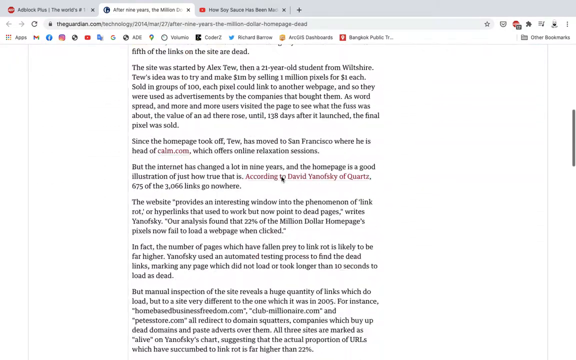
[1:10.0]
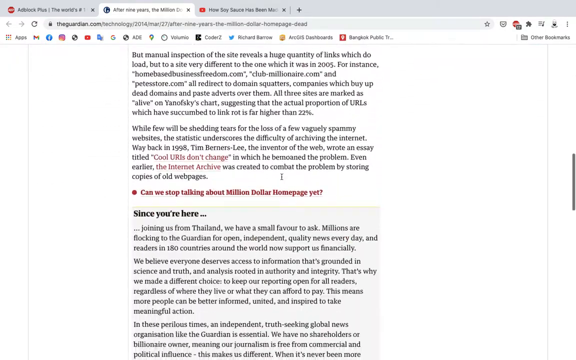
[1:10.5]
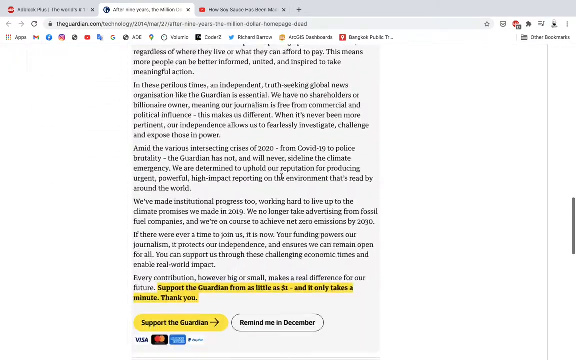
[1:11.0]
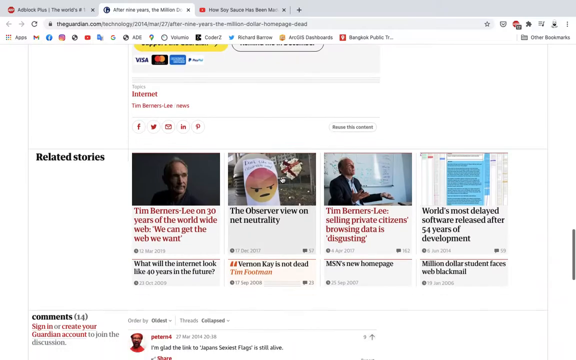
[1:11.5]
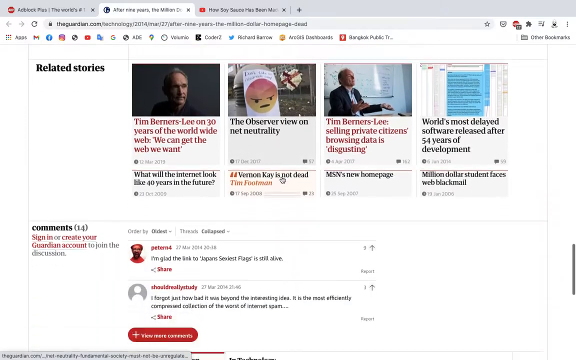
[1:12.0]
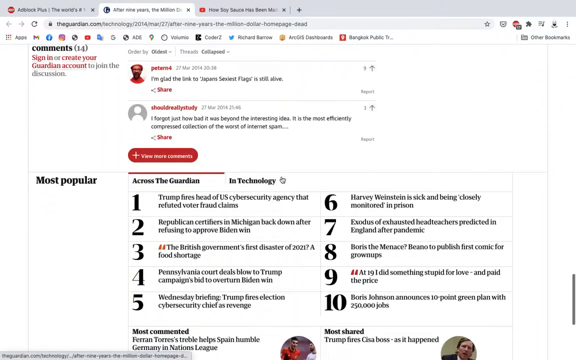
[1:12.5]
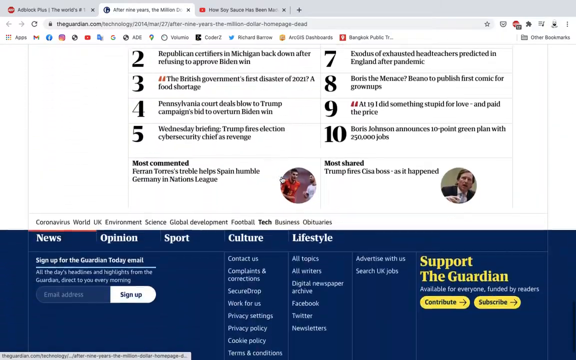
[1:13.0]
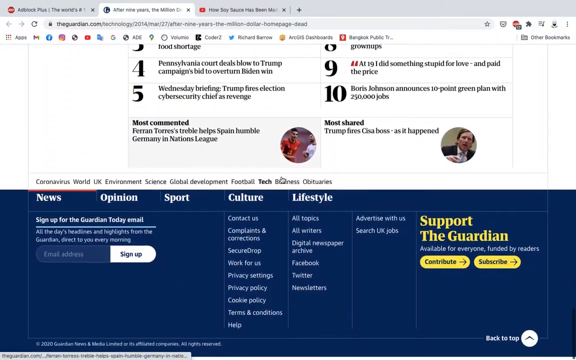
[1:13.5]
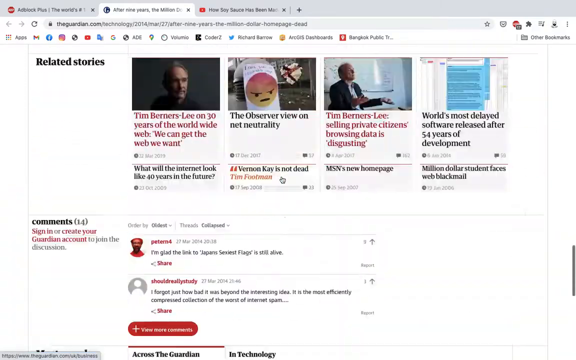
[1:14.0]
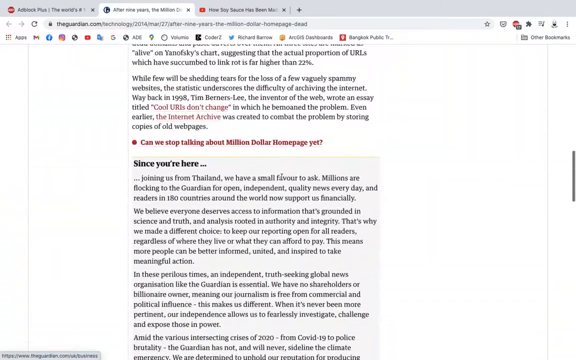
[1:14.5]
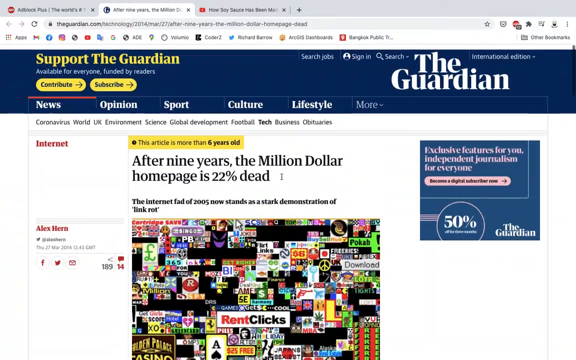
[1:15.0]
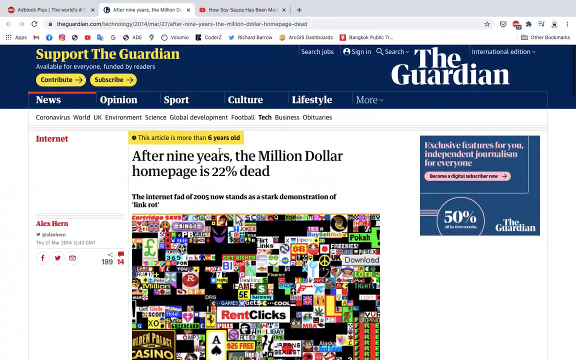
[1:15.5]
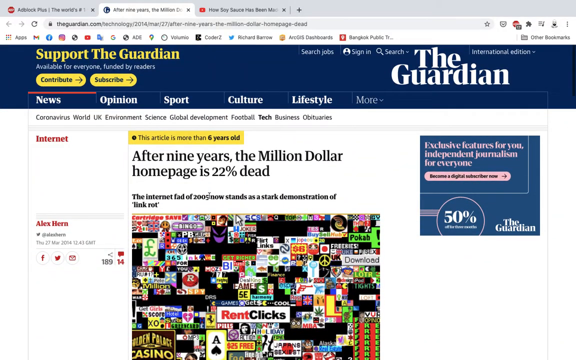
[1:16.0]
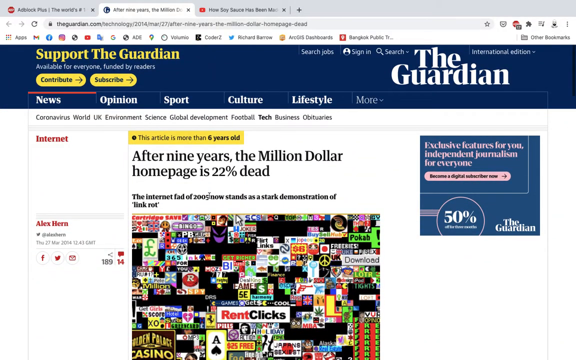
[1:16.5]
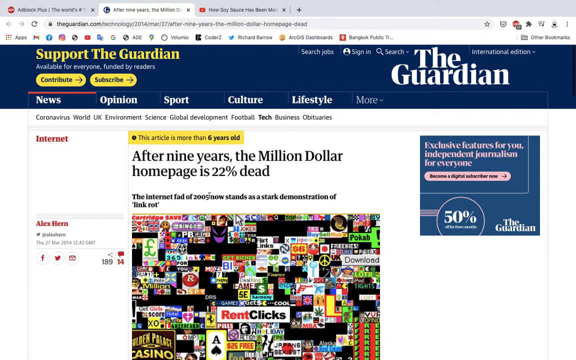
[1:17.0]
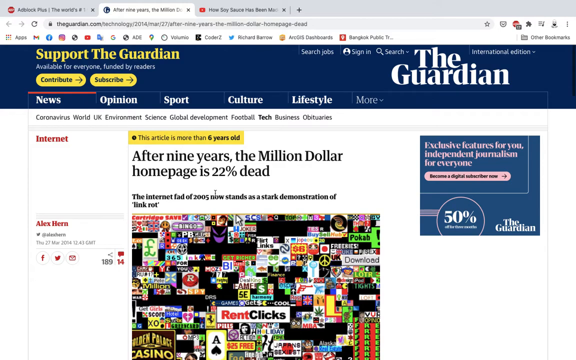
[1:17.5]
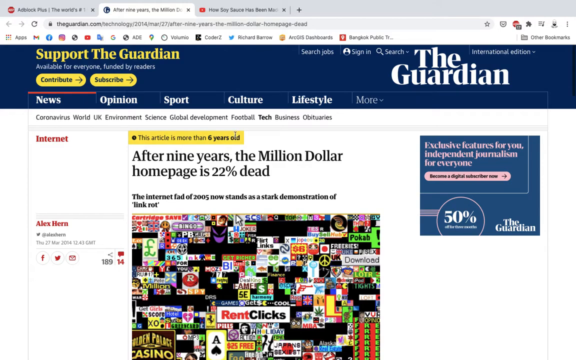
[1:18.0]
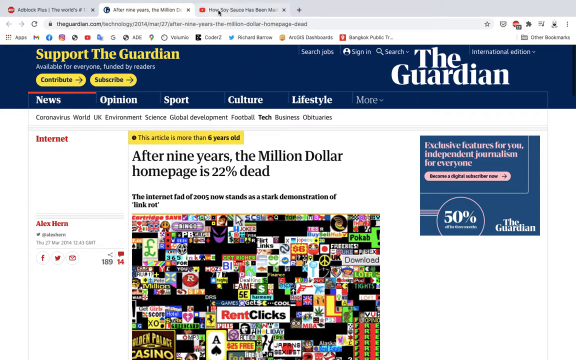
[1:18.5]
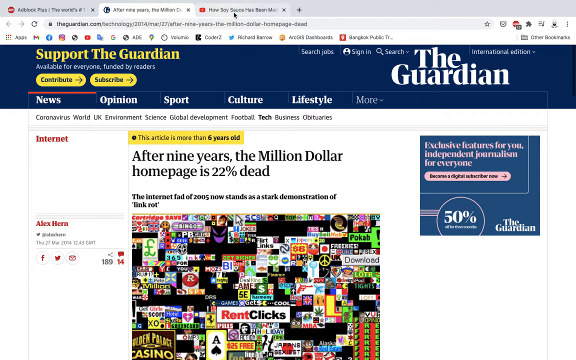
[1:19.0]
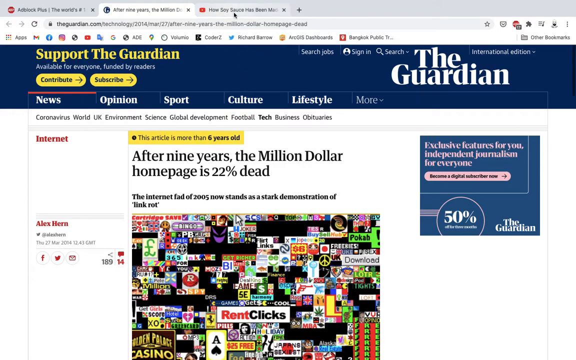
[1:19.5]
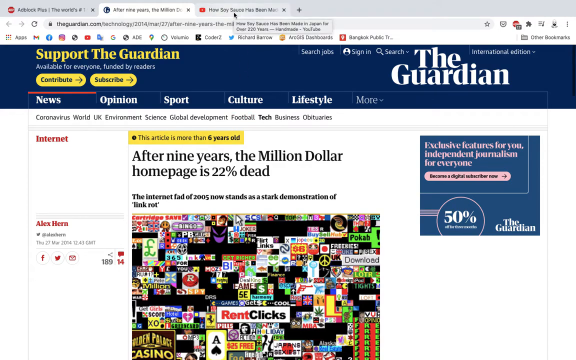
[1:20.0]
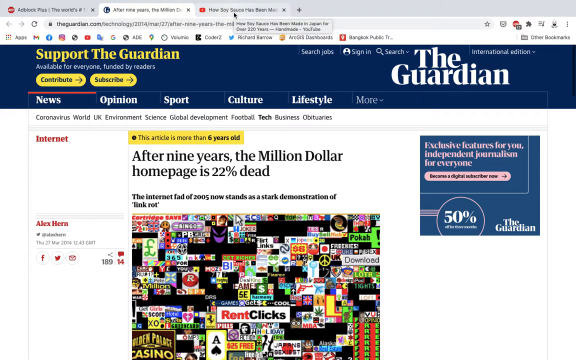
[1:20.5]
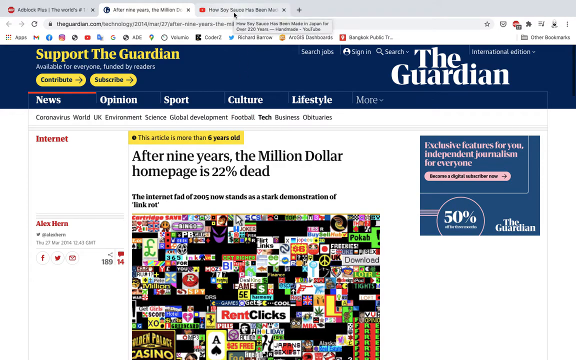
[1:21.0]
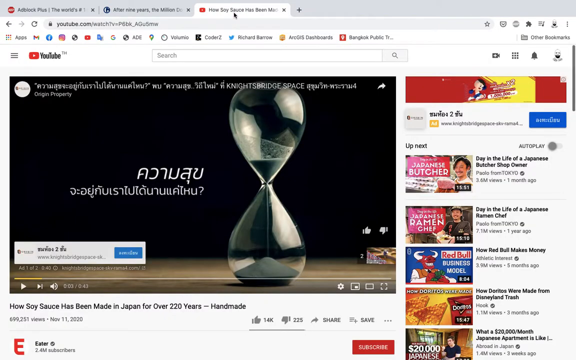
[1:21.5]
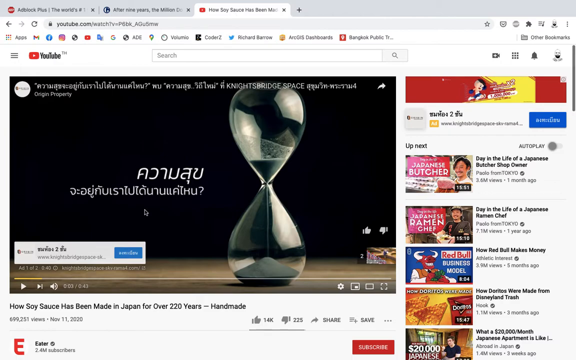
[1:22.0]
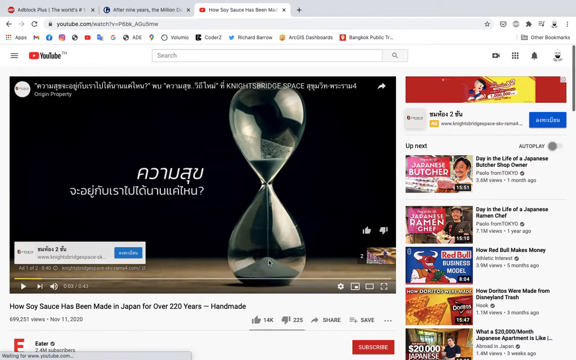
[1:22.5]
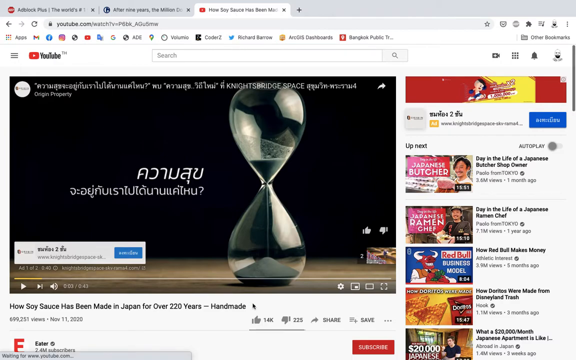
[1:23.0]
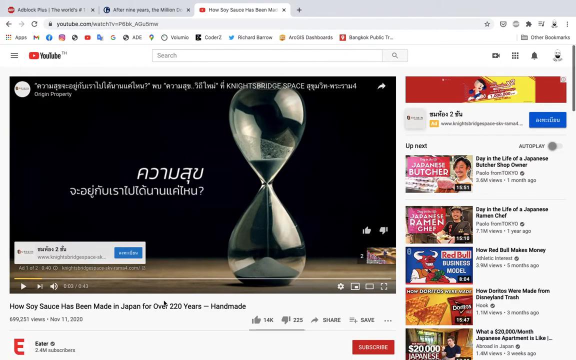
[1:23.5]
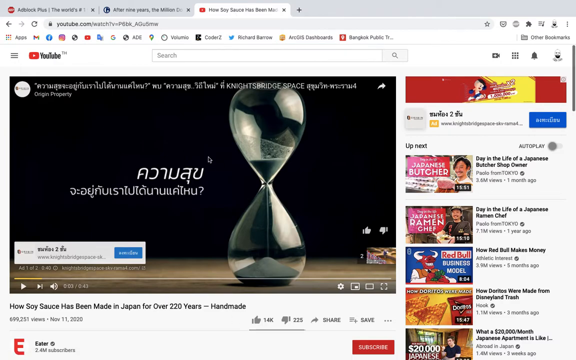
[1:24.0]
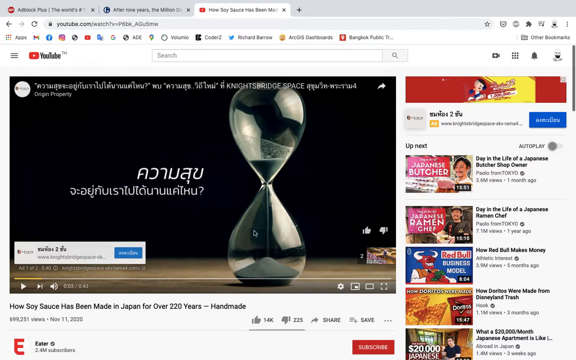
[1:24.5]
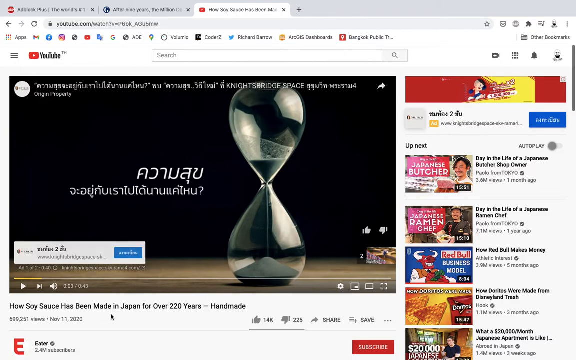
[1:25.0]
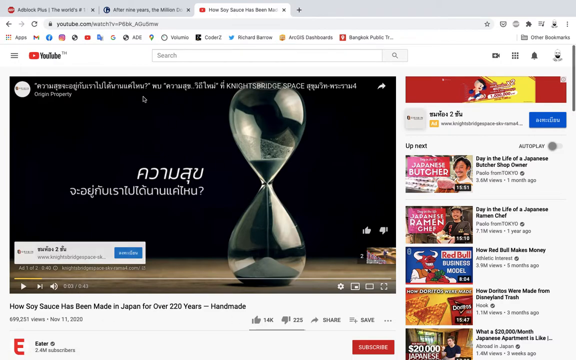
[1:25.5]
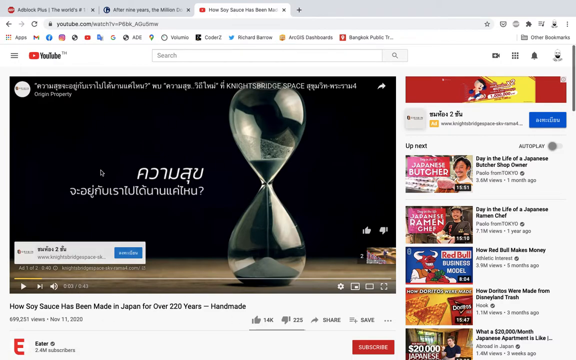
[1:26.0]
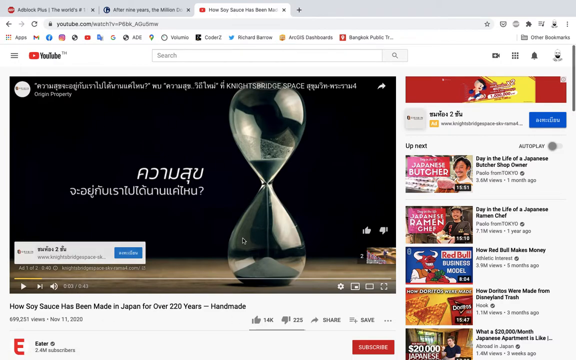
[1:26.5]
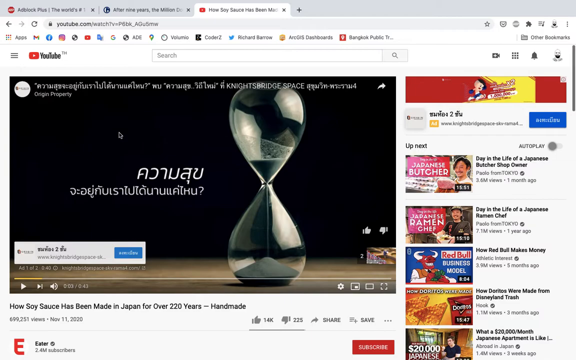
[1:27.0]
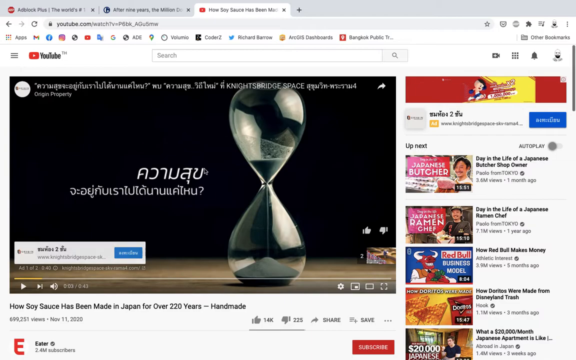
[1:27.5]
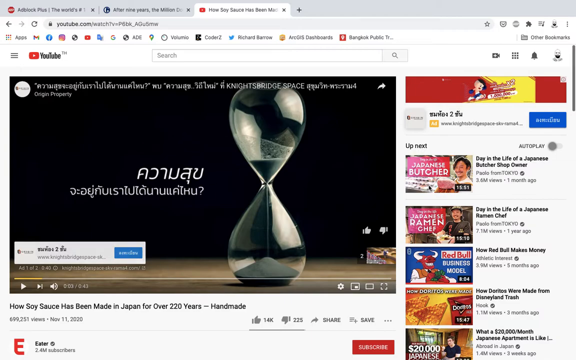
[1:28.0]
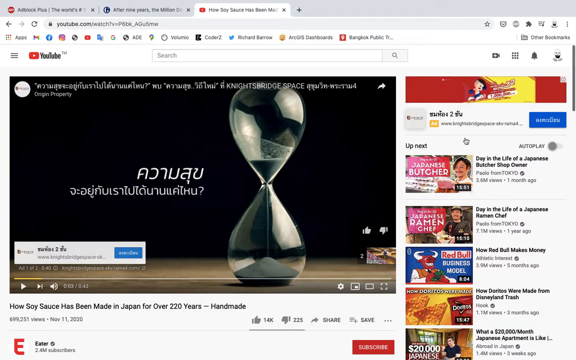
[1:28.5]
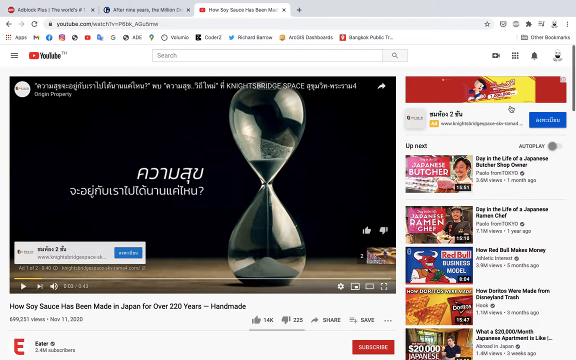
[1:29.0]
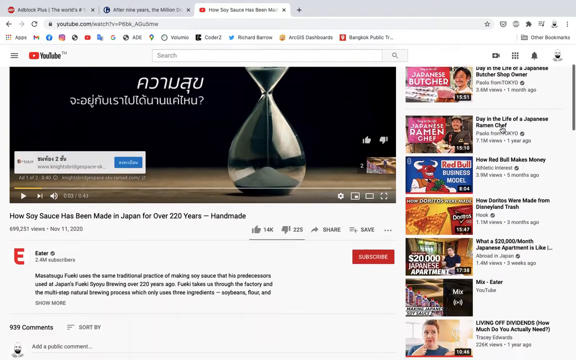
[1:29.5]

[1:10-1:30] The user continues scrolling down the Guardian website page and returns to the top, then selects a third tab called "how soy sauce has been made in Japan for over 220 years". This opens a YouTube page with a video of the same title. On the right is an up-next list of related videos, including ones about a Japanese ramen chef, how Red Bull makes money, and how Doritos were made from Disneyland trash. The cursor points out the video and the ad at the top right of the YouTube page. The user then scrolls down to show the comments below the video; the video itself takes up the largest portion of the page, on the left-hand side.